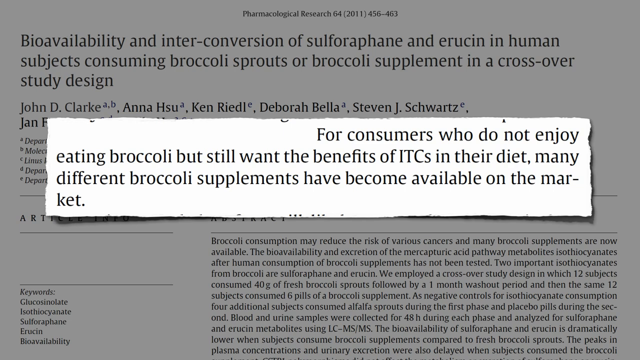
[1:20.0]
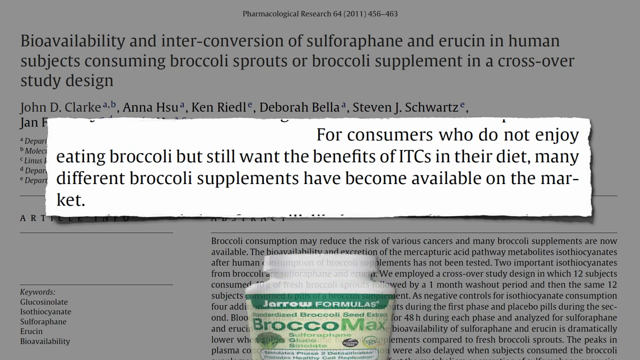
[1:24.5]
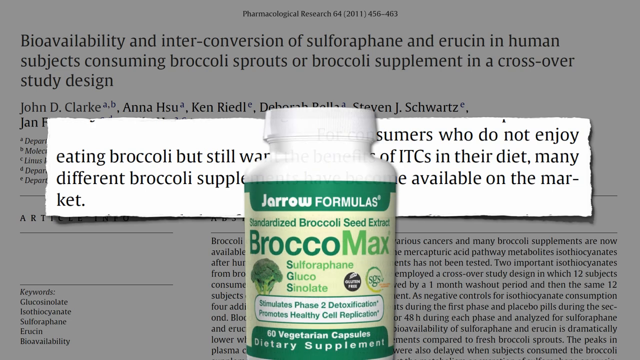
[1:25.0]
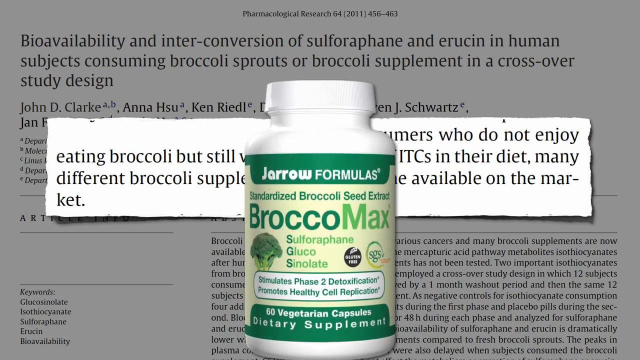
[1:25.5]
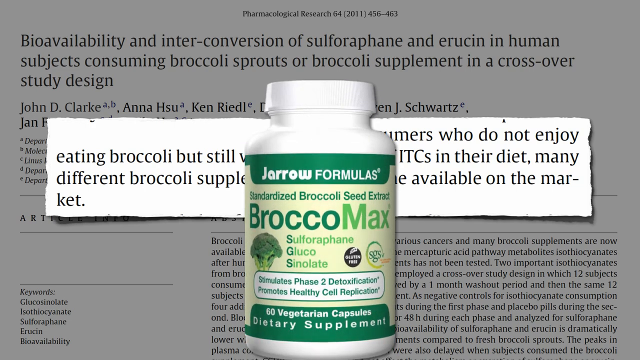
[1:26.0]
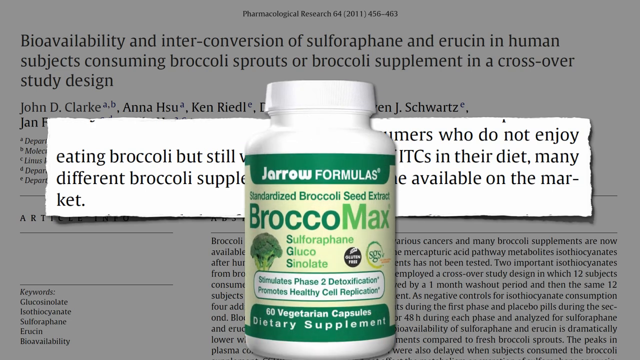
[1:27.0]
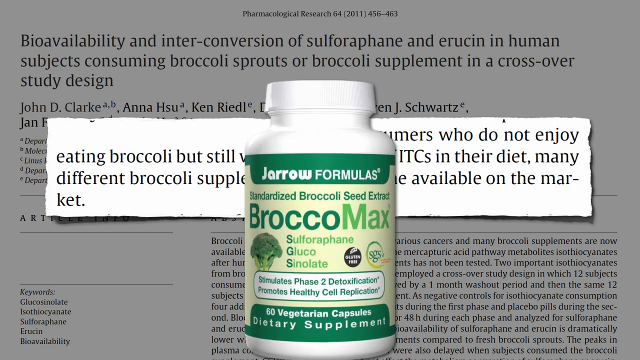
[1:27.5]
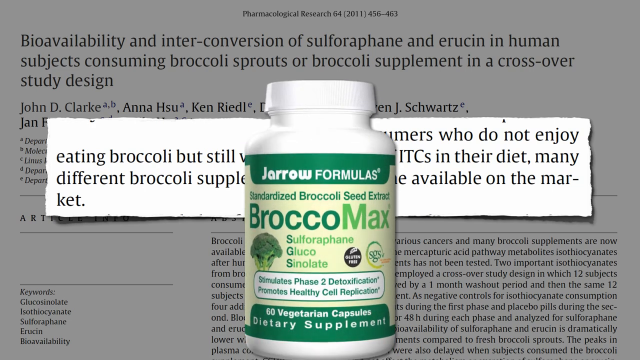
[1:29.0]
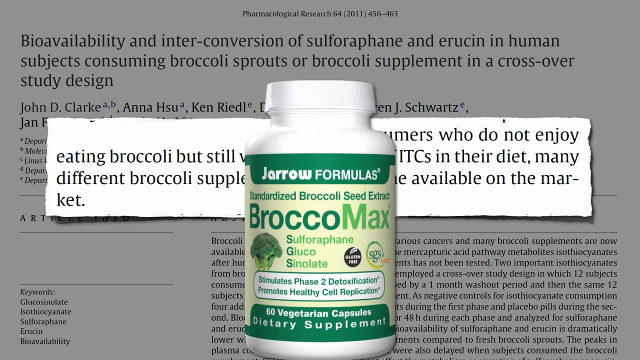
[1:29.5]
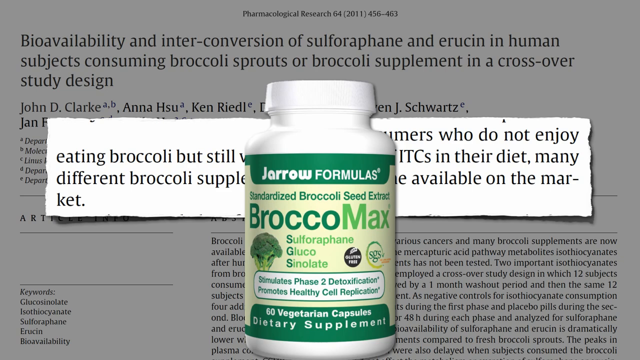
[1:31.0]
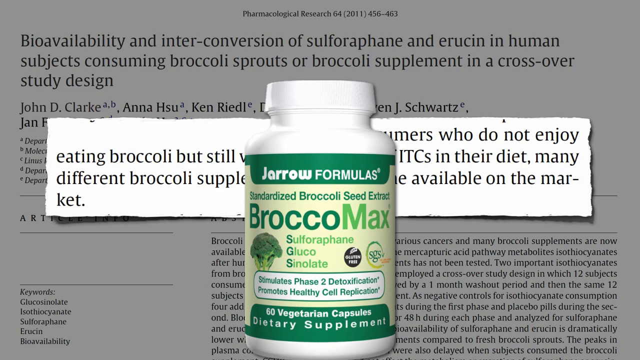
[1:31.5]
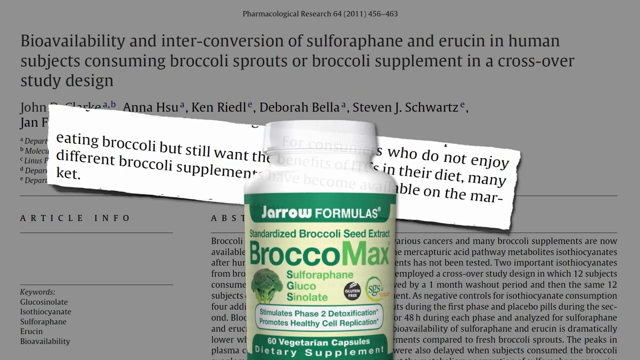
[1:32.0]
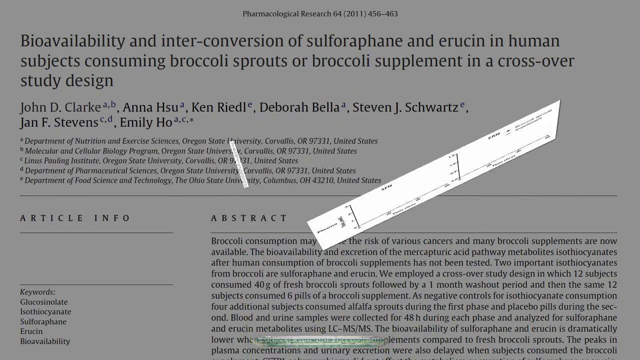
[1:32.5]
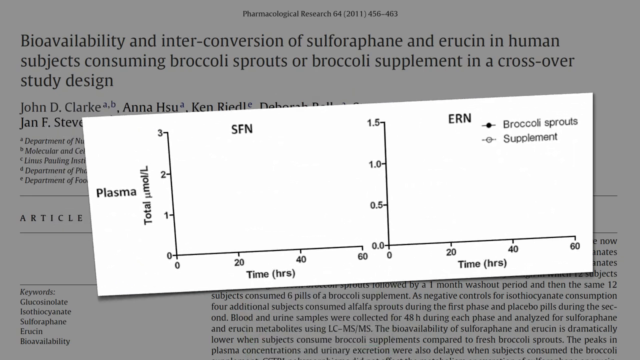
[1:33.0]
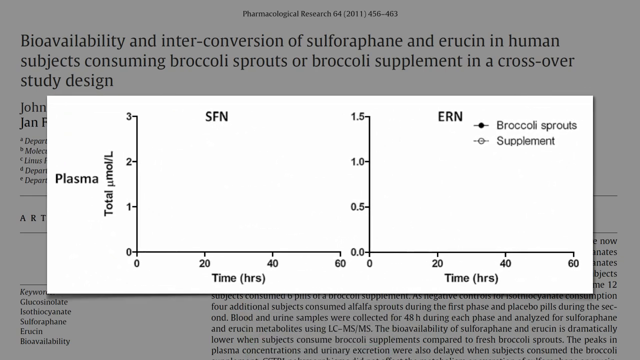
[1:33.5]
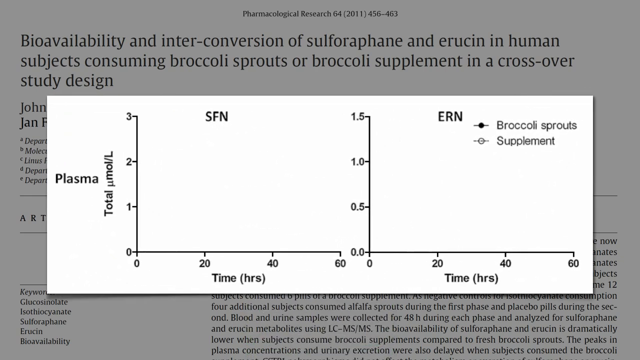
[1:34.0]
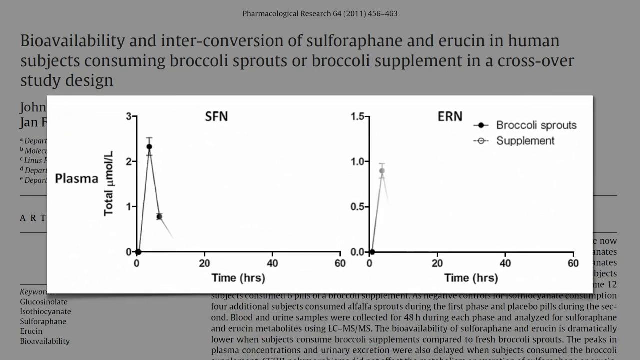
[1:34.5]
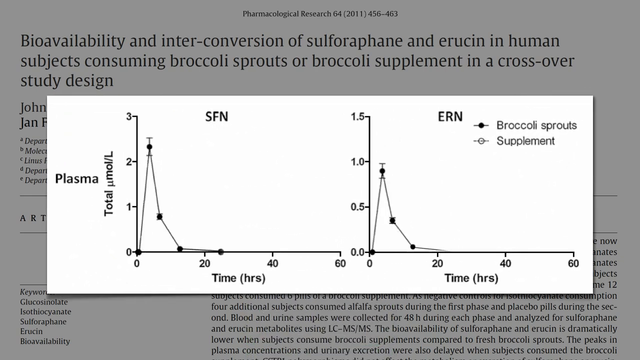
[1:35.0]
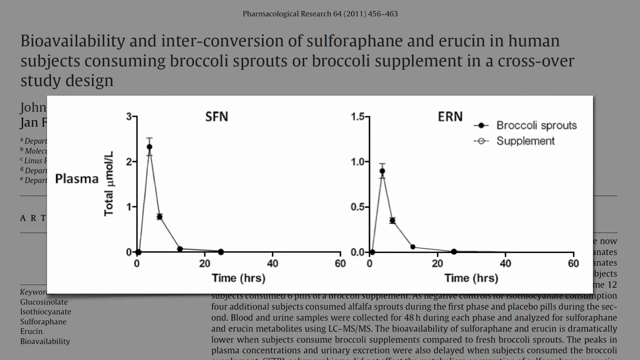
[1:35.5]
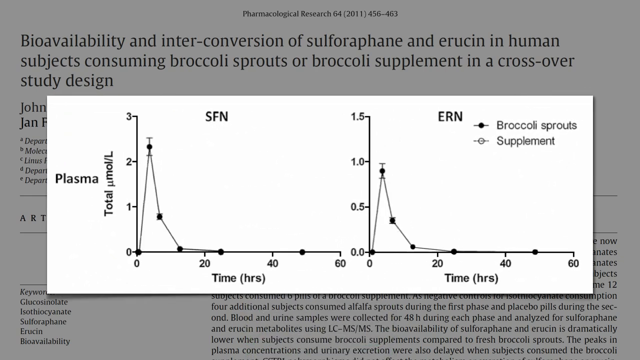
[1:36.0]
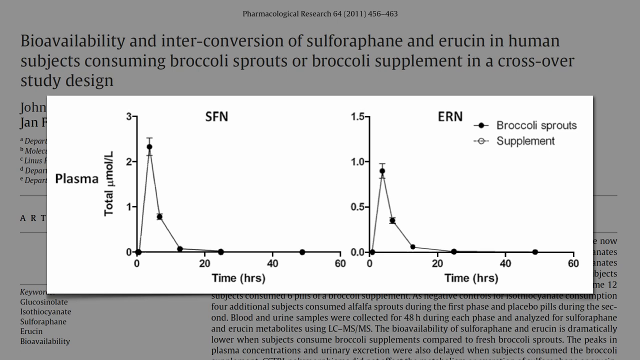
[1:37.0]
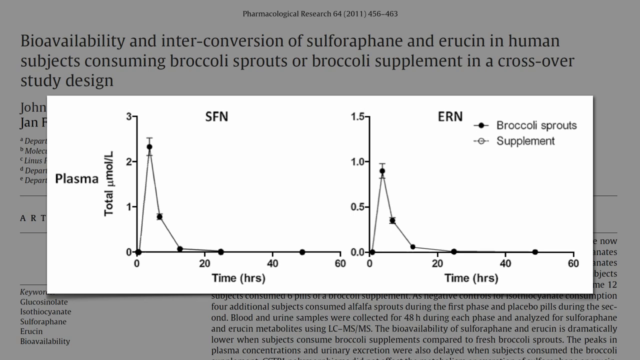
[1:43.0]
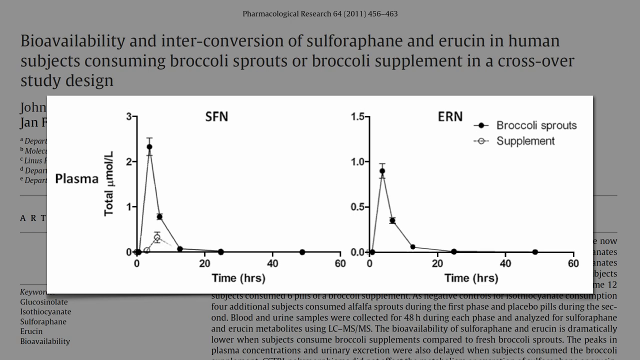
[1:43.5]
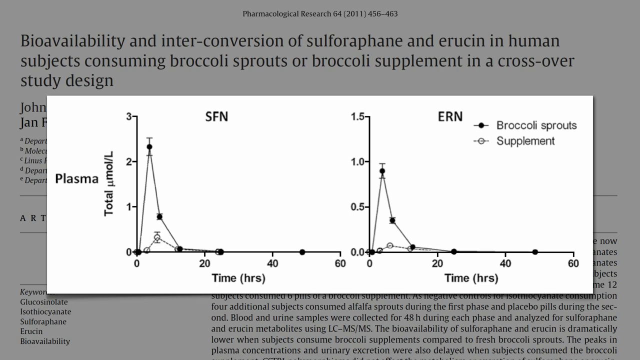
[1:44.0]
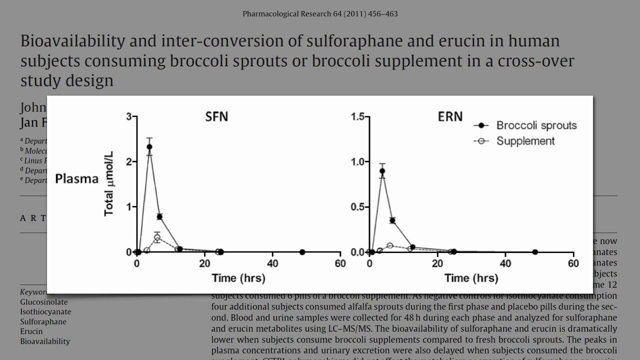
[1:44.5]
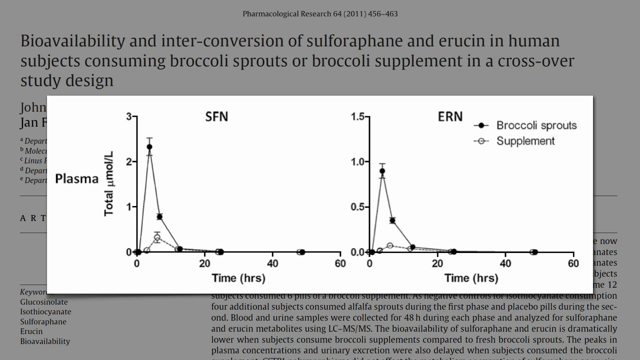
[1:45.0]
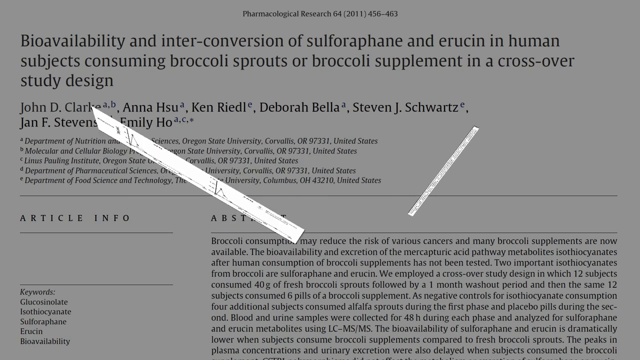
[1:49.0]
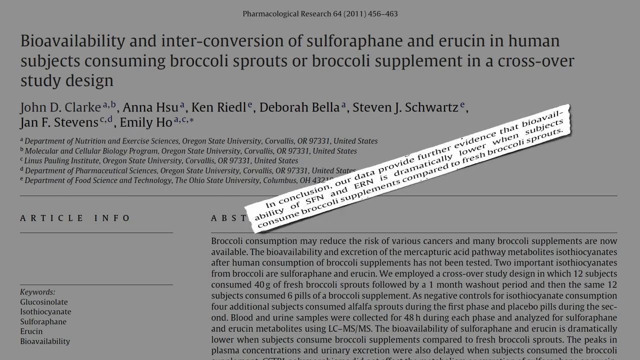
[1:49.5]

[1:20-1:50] One of the article pages continues in the background while a specific part is highlighted in the center, reading "for consumers who do not enjoy eating broccoli but still want the benefits of ITCs in their diet, many different broccoli supplements have become available on the market." A slow animation then pops up in the bottom center half of the video, showing a white plastic bottle. The words on the bottle read "Gero formula", "standardized broccoli seed extract", "Broccomax", "sulforaphane", "glucosinolate", "stimulates phase 2 detoxification", "promotes healthy cell replication", "60 vegetarian capsule" and "dietary supplement", and there is a picture of a broccoli head on it. The bottle is white and different shades of green. Next, two graphs appear: the first labeled "SFN" and the second labeled "ERN". One axis shows "plasma total mole/L" and the other shows time in hours, and both graphs show indicators for broccoli sprouts and supplement.